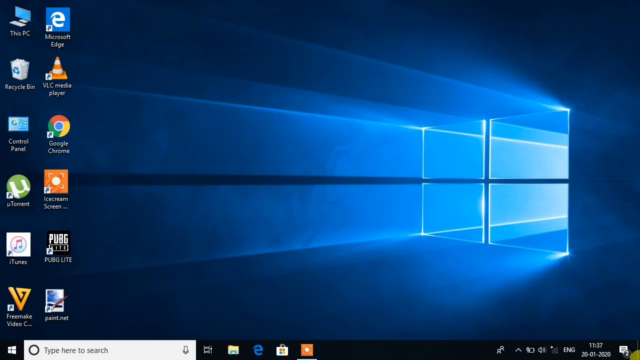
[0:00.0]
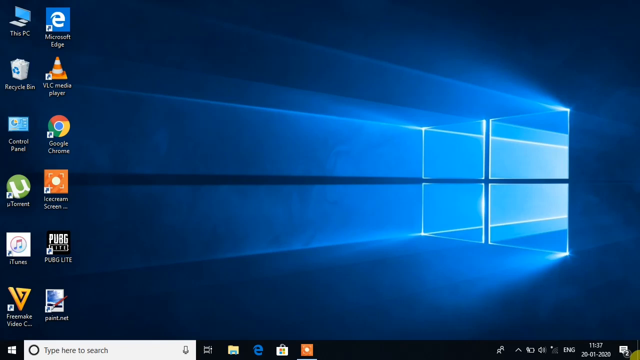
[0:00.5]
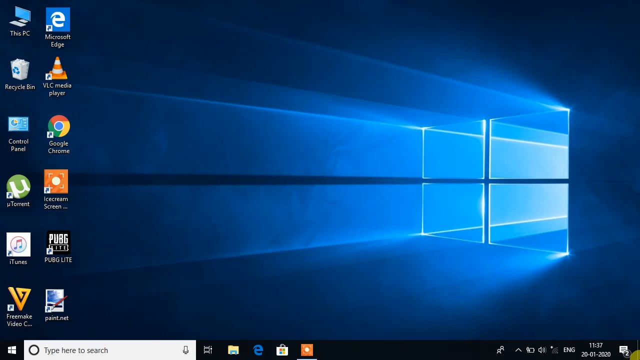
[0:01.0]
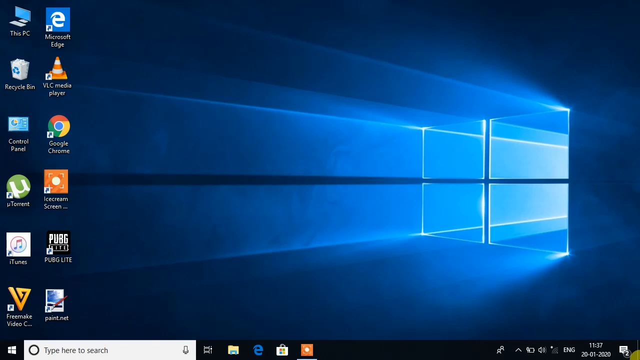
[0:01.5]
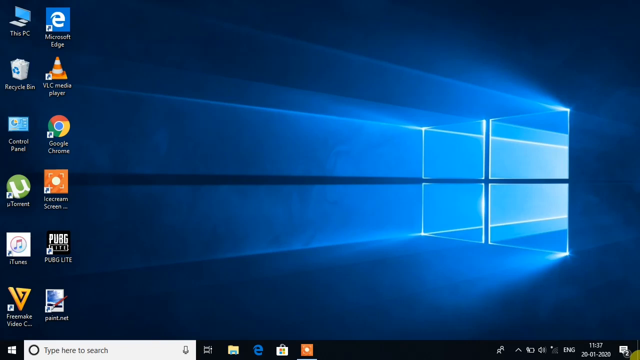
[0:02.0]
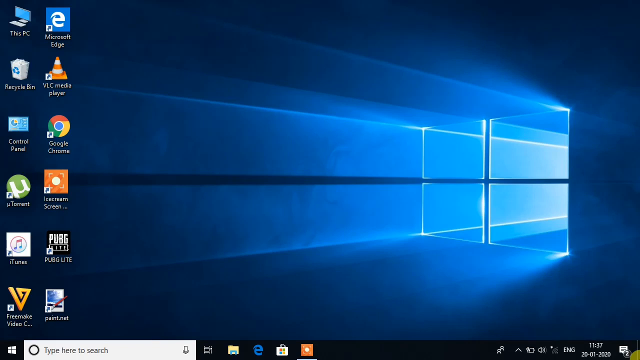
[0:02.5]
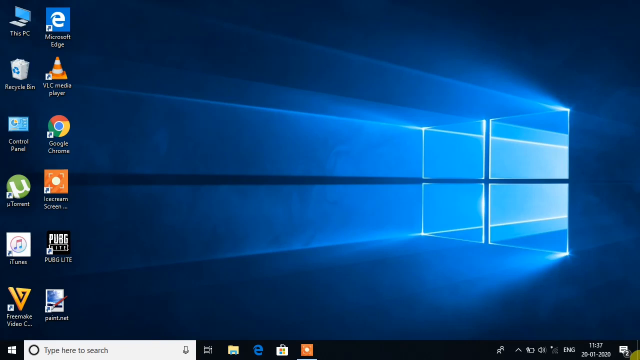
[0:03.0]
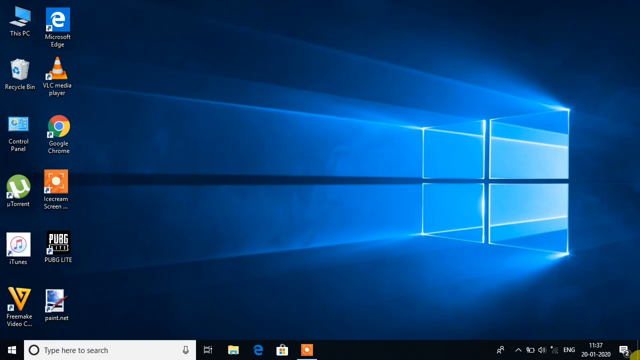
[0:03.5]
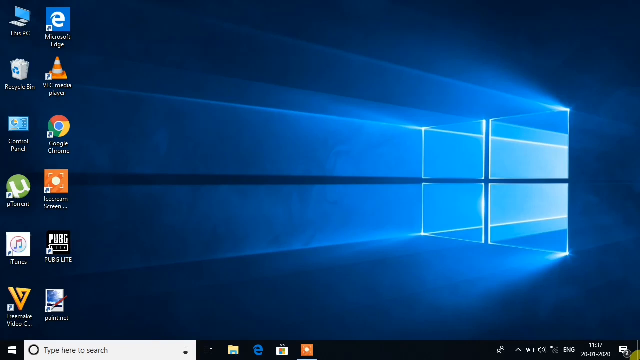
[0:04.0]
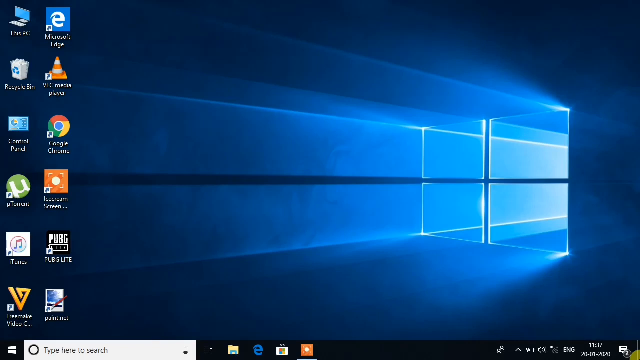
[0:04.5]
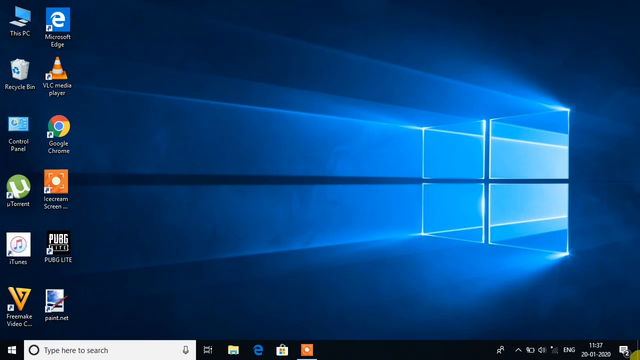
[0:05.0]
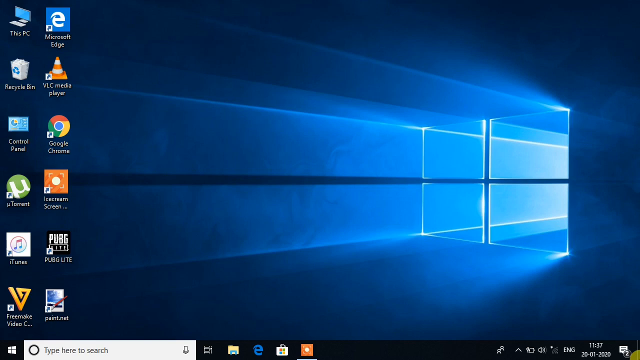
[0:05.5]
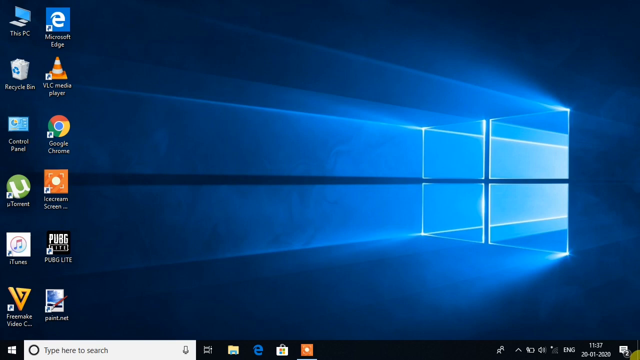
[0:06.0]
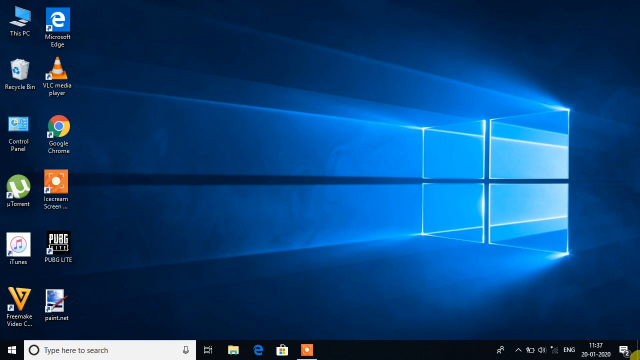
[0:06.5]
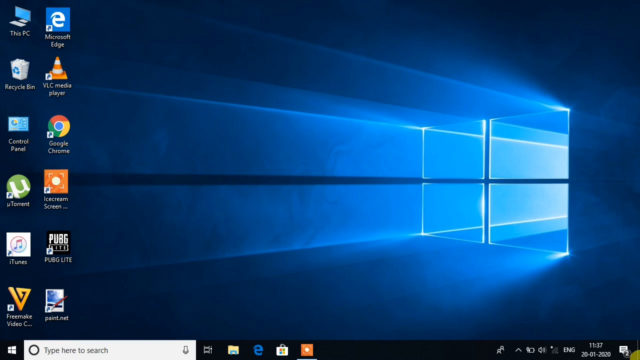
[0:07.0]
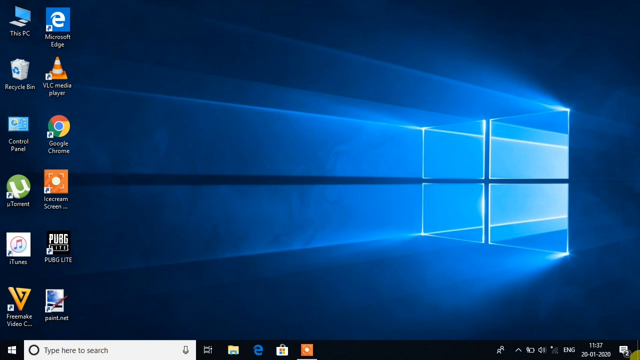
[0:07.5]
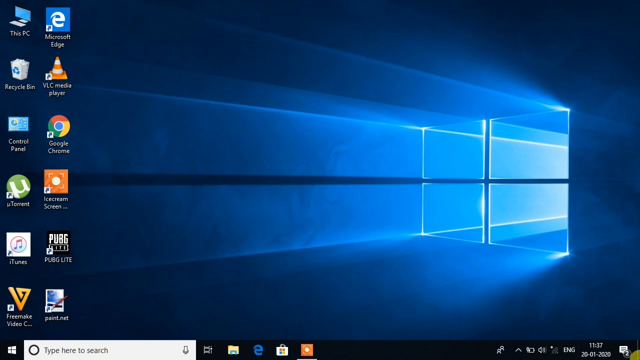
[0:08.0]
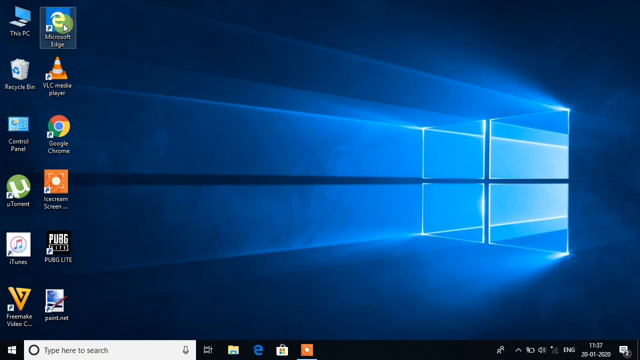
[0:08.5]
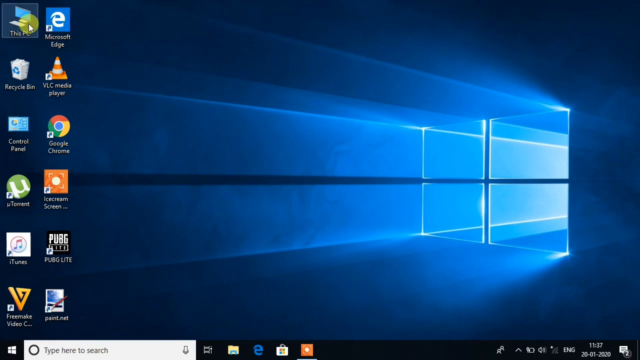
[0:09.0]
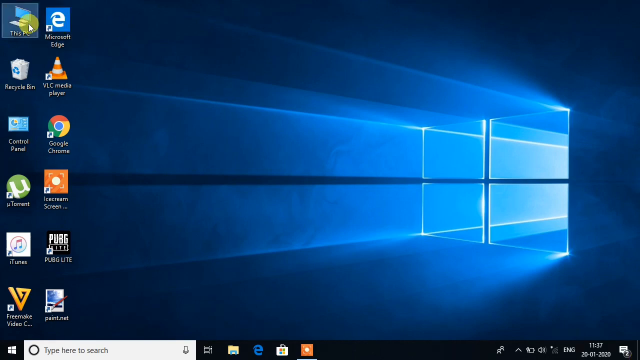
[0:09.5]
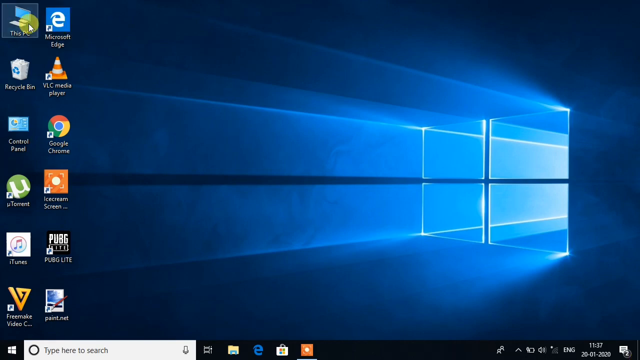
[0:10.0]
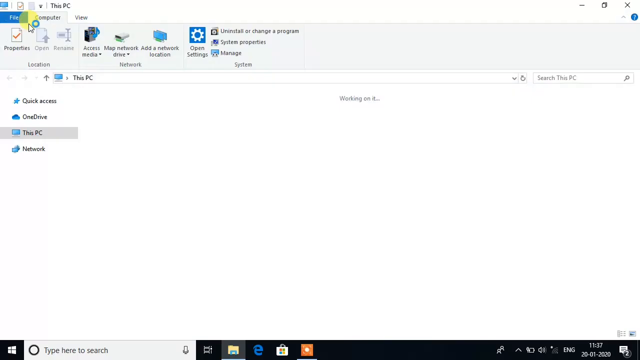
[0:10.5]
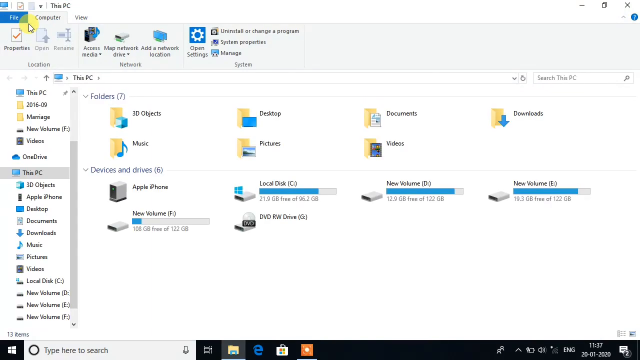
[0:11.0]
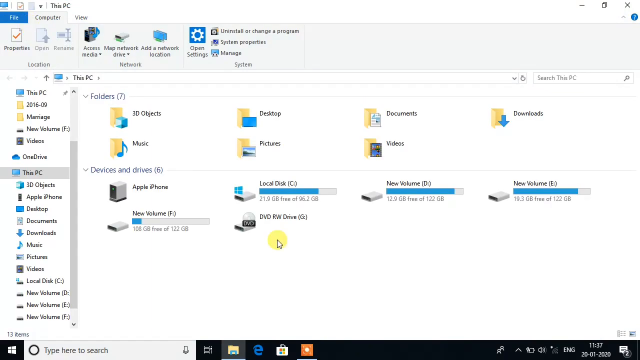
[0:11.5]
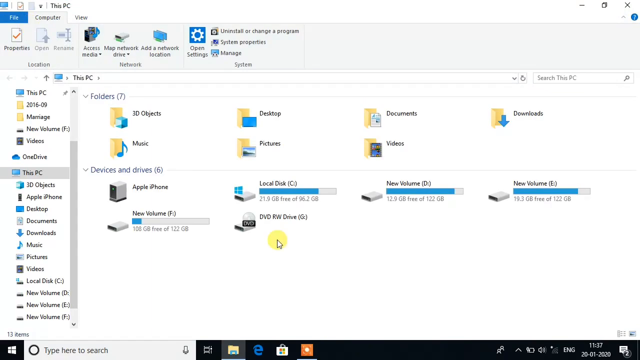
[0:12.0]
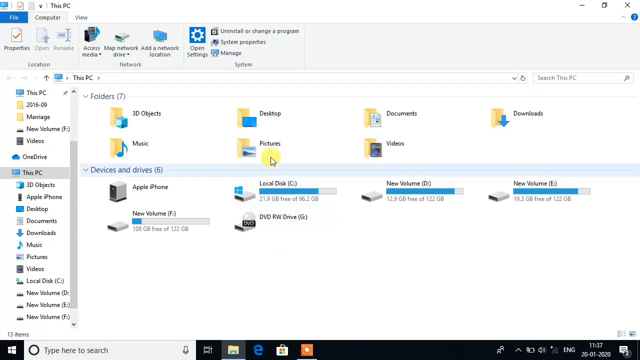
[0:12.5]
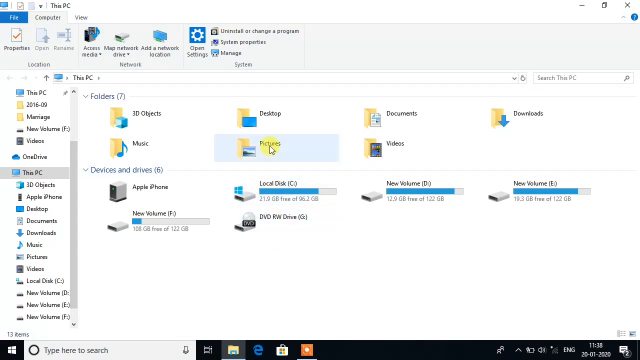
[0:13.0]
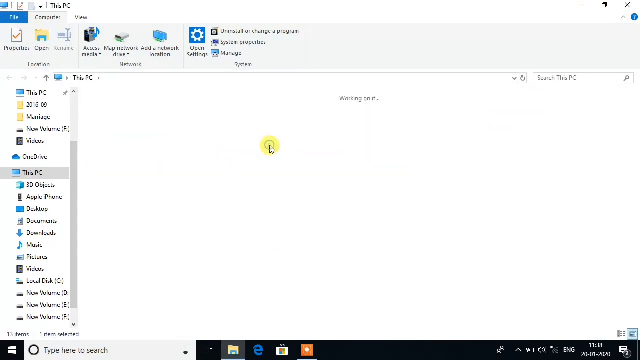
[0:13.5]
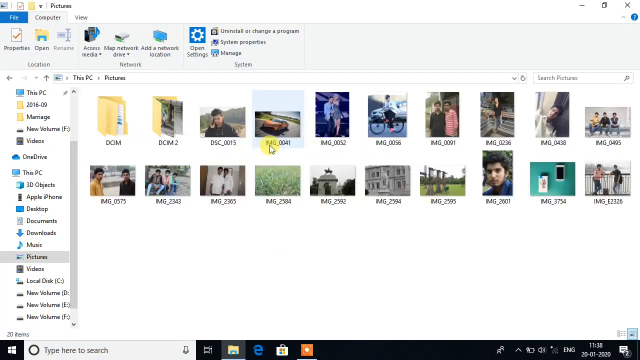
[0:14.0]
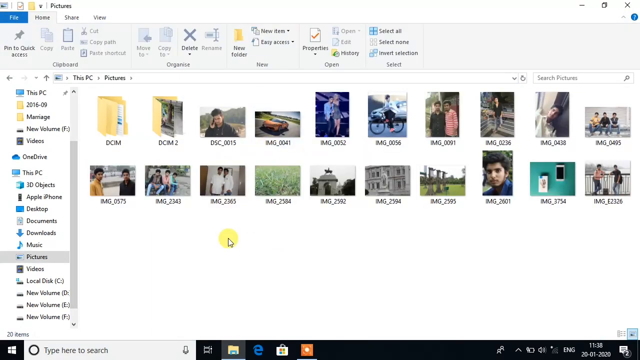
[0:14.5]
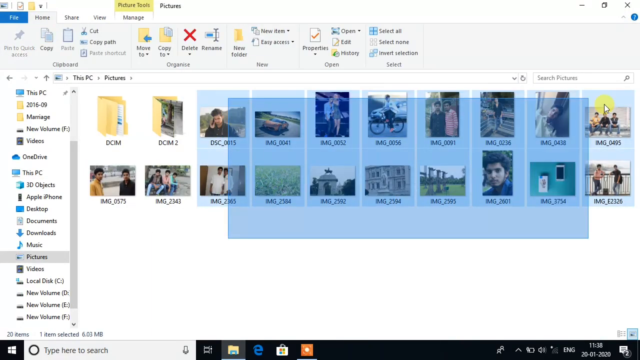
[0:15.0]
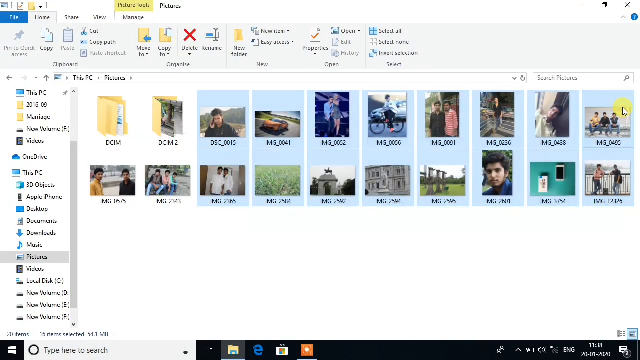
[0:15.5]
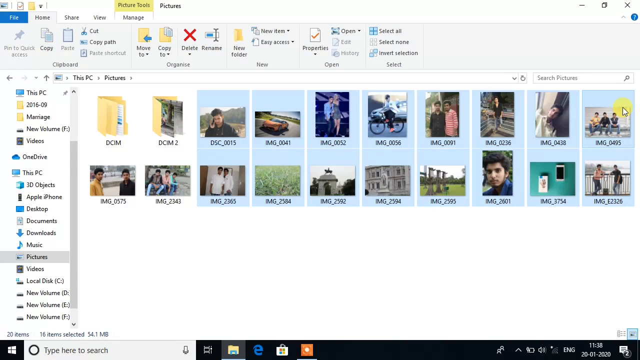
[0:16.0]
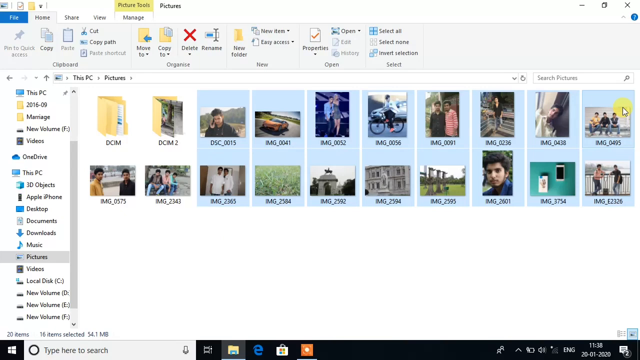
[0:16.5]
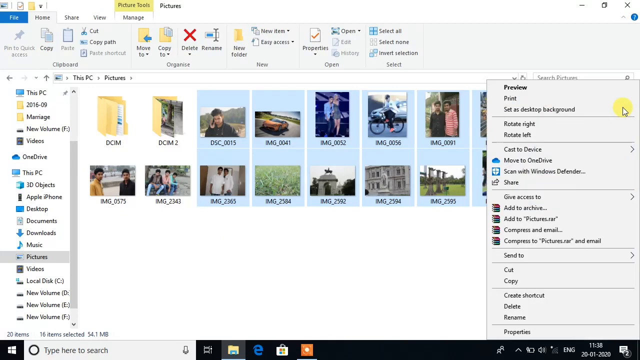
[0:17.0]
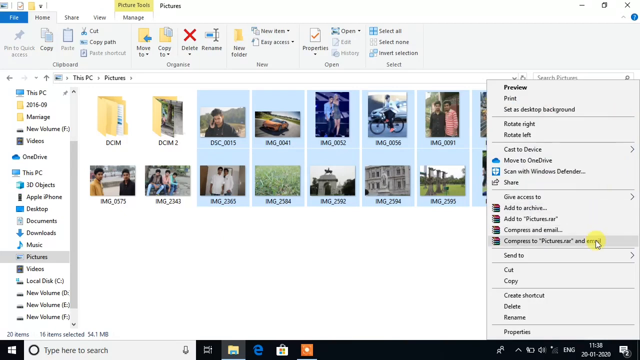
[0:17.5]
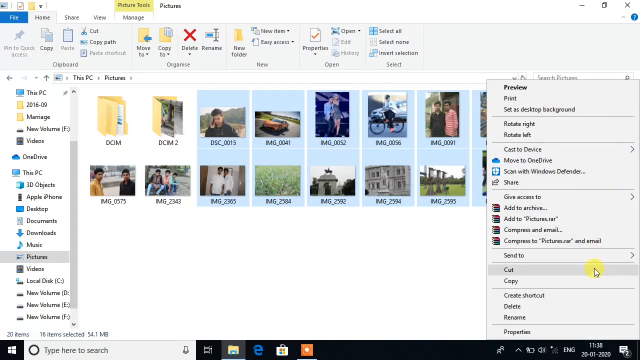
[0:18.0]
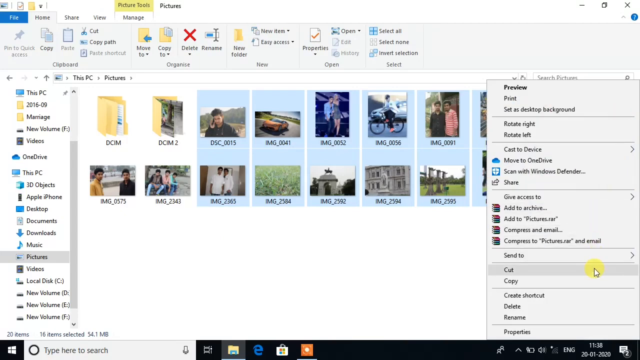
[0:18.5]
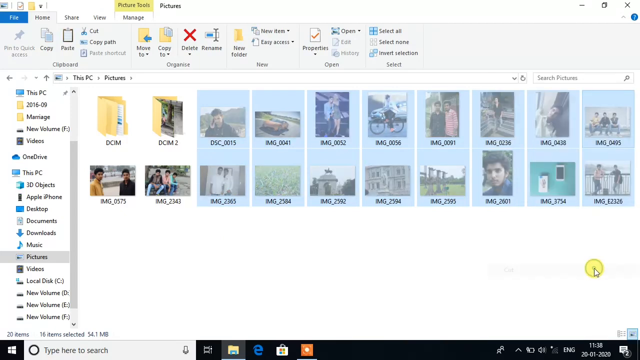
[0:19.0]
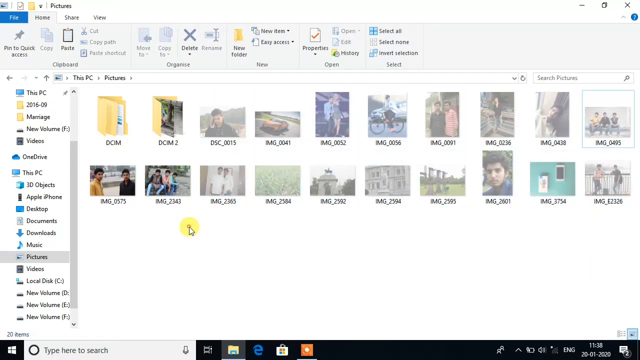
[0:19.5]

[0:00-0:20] The video starts as a screen share of someone's computer whose desktop background is an old Windows logo: a four-pane window off to the right side with what looks like beams of light shining through it, and everything else in the background is blue. Icons run from top to bottom down the far left in two columns, including a Microsoft emblem, the recycle bin and Google Chrome. The cursor moves over to the icon labeled "this PC" and clicks it, opening what appears to be the file box for this PC, which shows the various folders, such as documents, videos and downloads, along with the drives and any devices. The user scrolls to the photos, highlights a whole group of photos, apparently right-clicks, and goes down to cut.